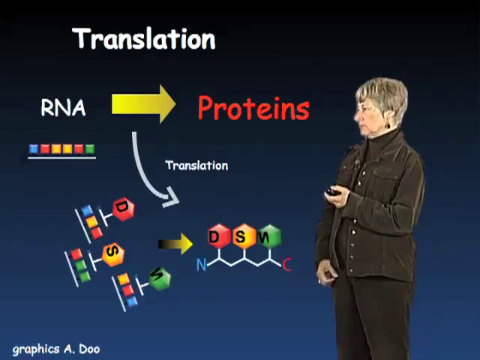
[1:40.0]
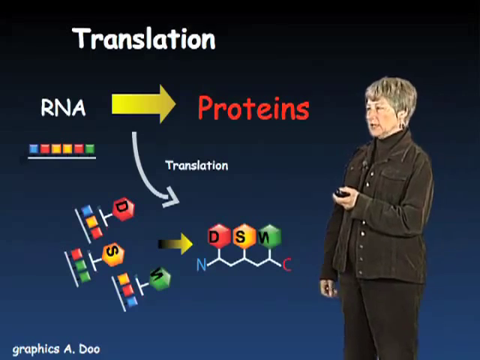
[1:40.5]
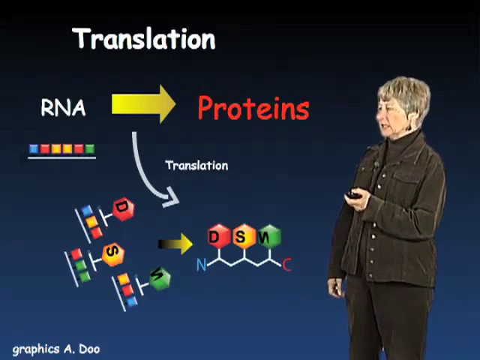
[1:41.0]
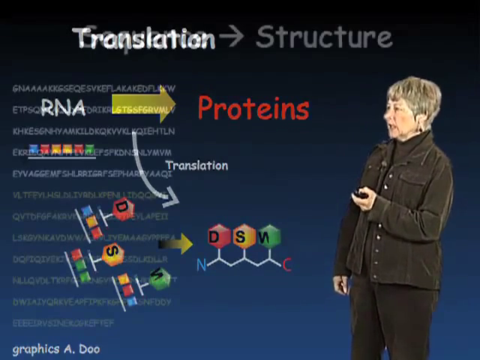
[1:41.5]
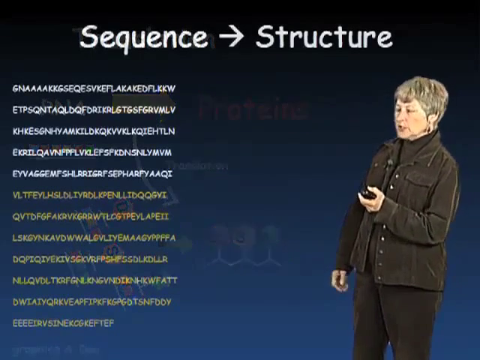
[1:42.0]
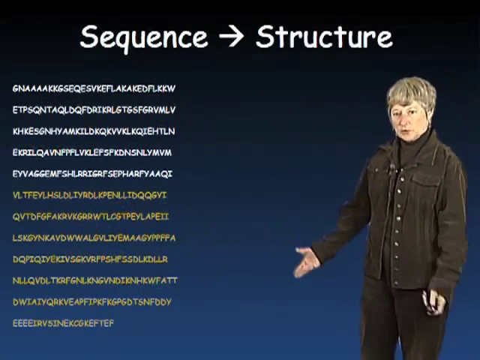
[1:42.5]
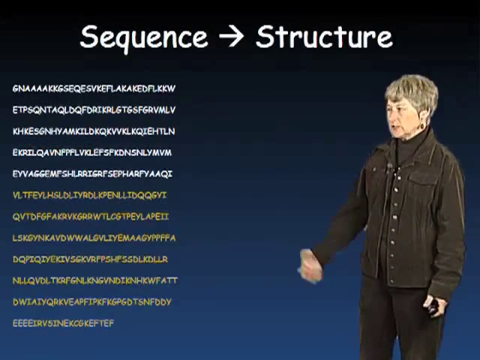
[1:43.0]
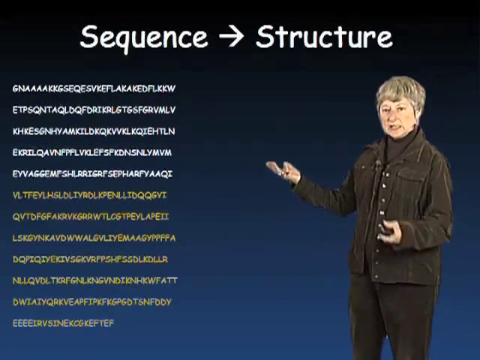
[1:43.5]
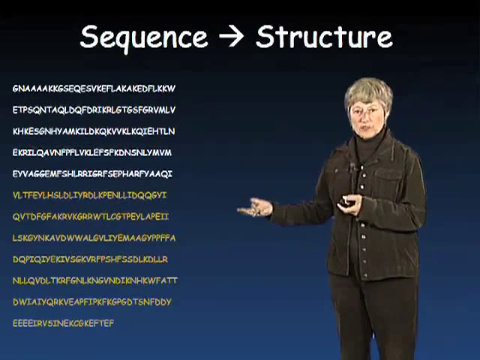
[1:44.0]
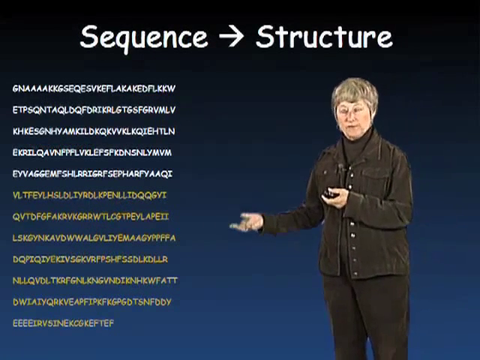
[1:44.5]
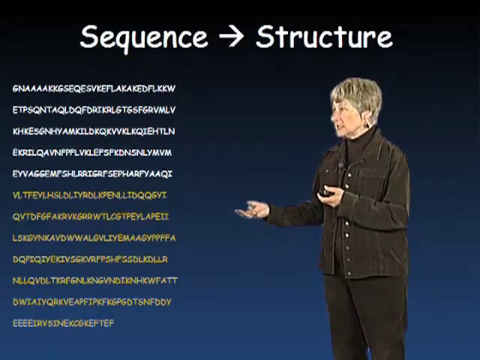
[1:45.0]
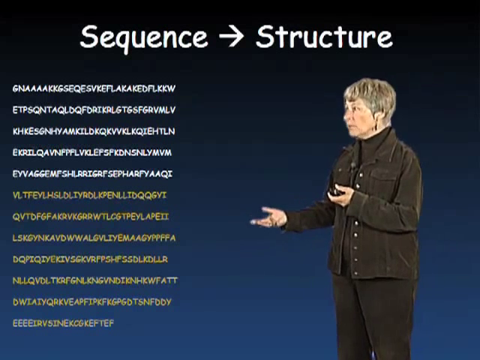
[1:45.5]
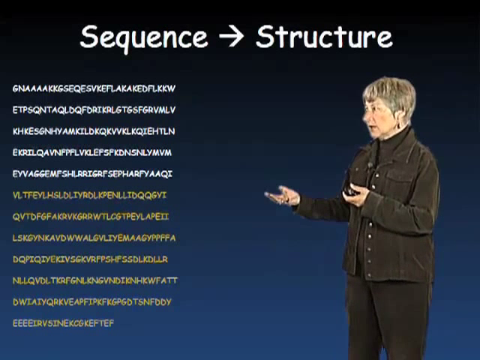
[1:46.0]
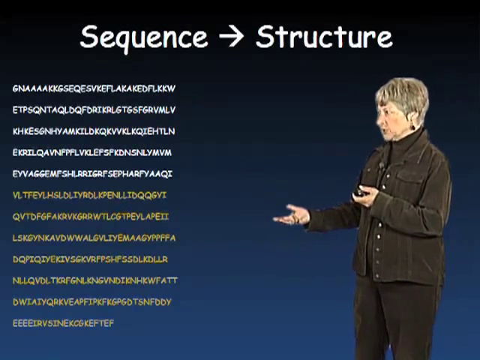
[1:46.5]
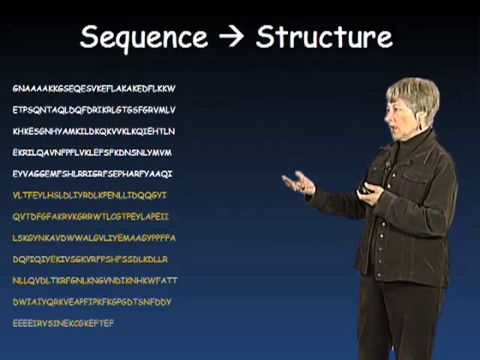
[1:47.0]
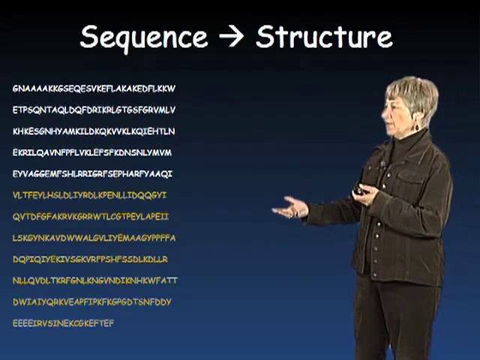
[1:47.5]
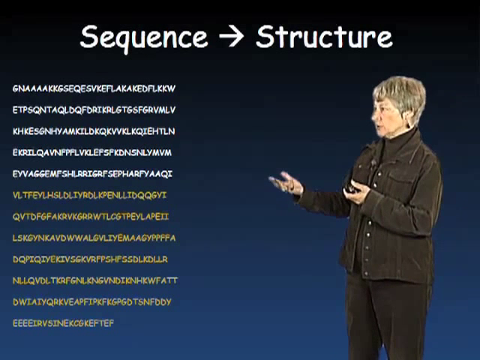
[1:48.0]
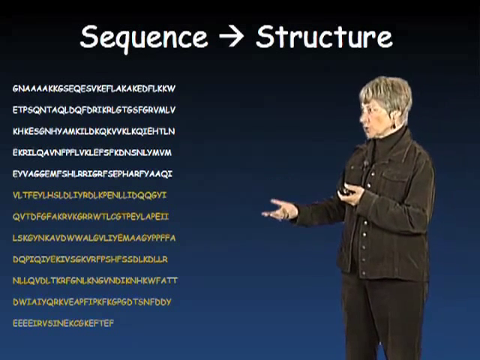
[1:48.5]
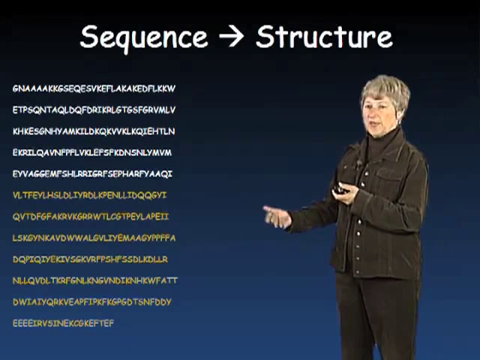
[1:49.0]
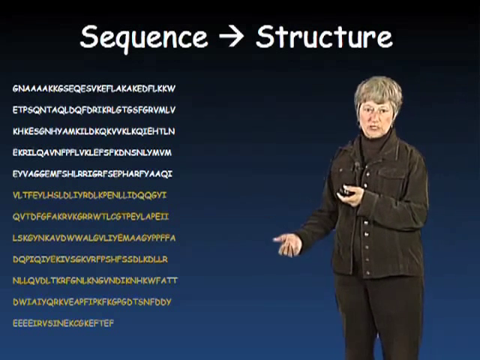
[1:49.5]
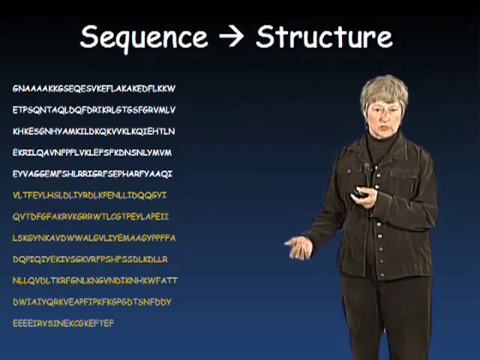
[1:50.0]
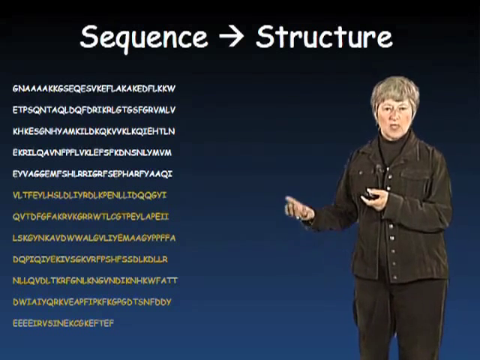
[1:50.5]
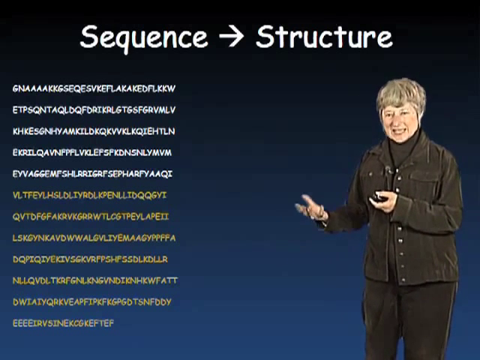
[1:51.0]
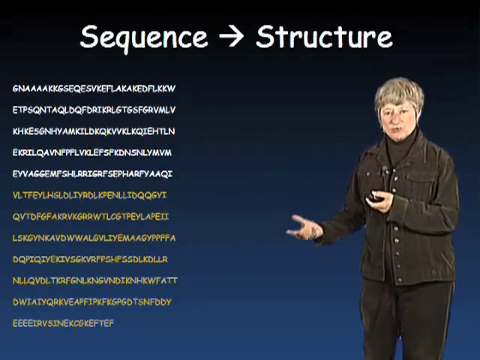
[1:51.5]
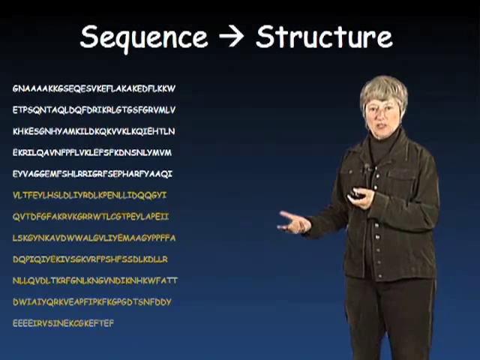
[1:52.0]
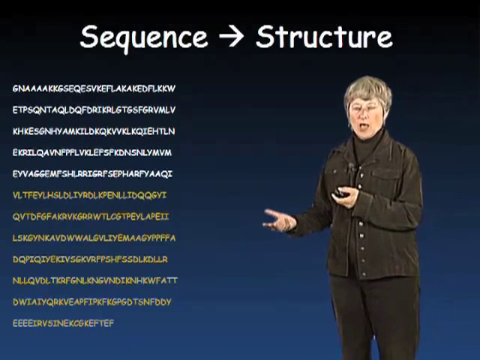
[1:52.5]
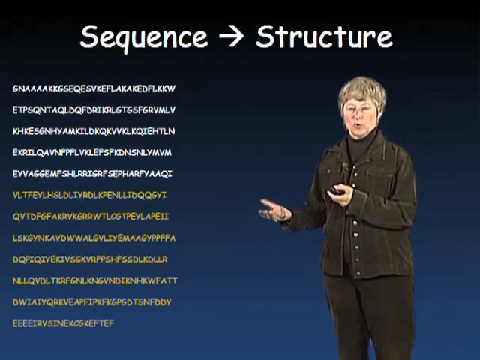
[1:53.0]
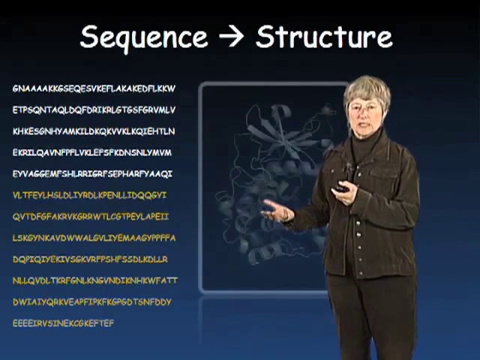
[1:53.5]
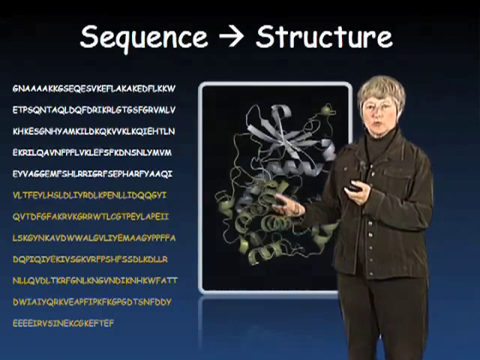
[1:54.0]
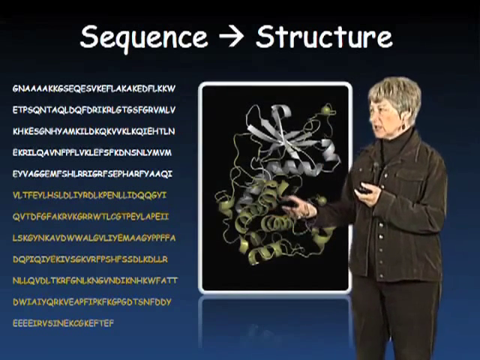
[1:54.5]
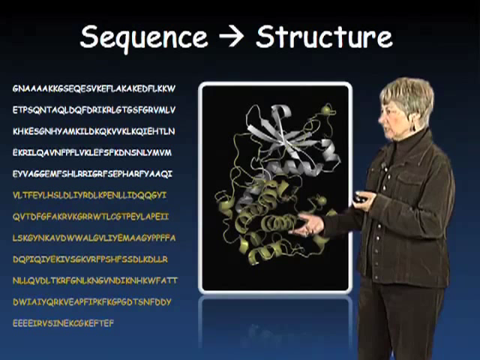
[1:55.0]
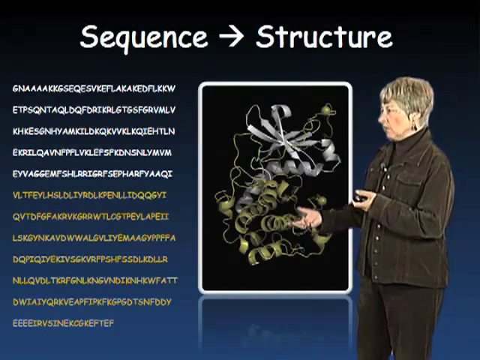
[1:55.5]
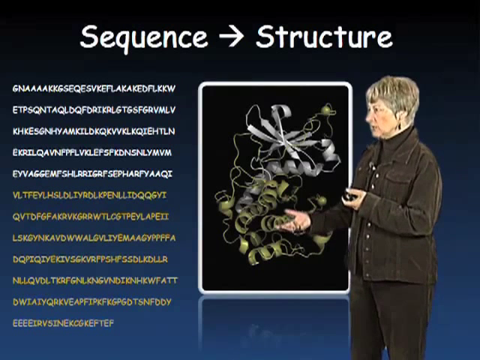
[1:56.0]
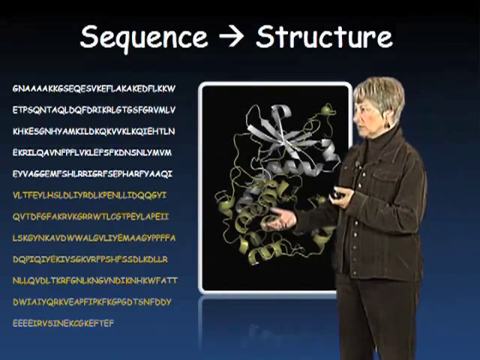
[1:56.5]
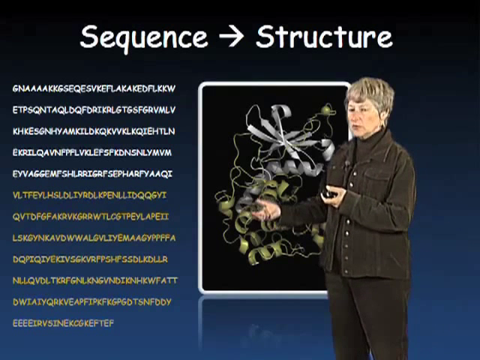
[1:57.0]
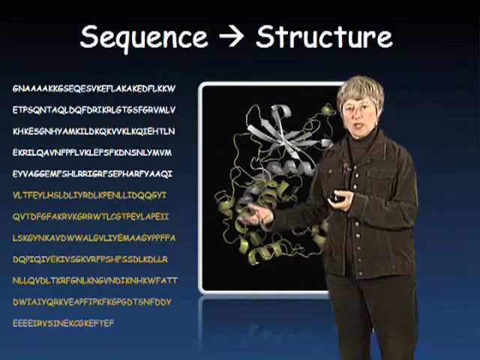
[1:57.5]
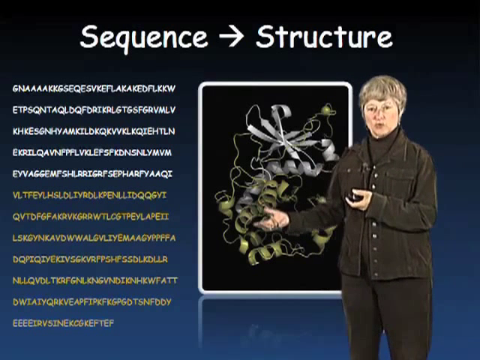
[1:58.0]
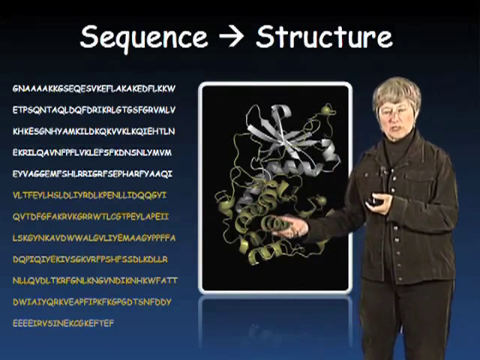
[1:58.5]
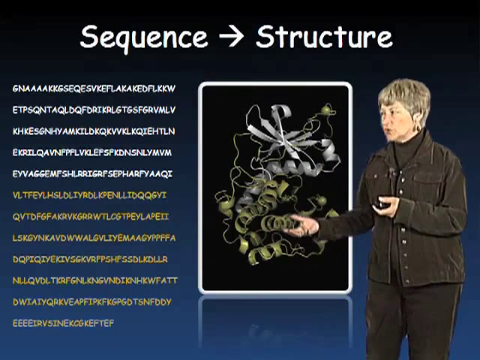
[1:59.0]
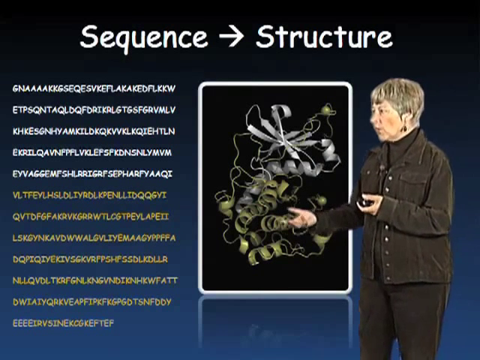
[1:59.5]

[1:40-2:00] The screen reads "translation" at the top with "RNA to proteins," and a row of colored objects underneath "RNA." A white arrow comes down from a yellow arrow above it and points toward the right of the screen, with "translation" above it. Underneath are larger objects with letters in them. On the left, D is on top of S on top of M, and an arrow points to D, S, M on colored objects in a straight line. Next, a new screen reads "sequence to structure," with pairings of sequences on the left side, while the speaker continues speaking from the bottom right corner. To the right of the sequences is a rectangular picture framed in a white line, containing abstract objects: curls, petals and squiggly lines.